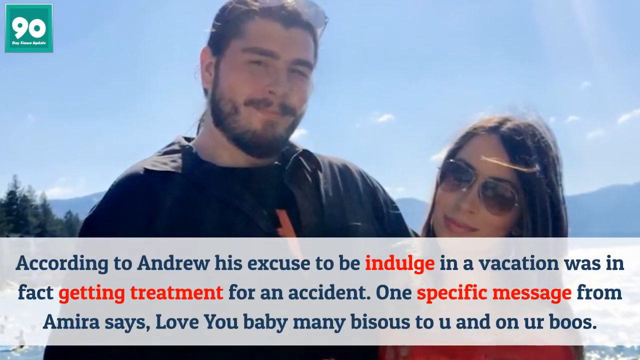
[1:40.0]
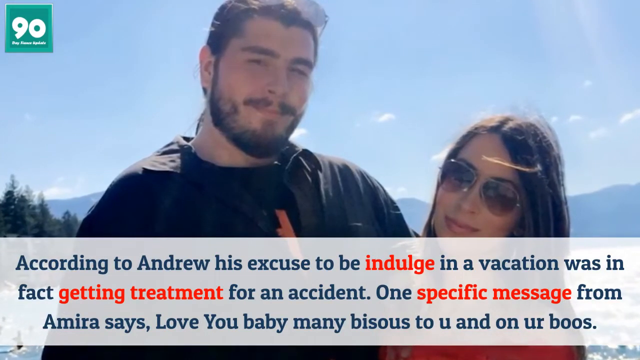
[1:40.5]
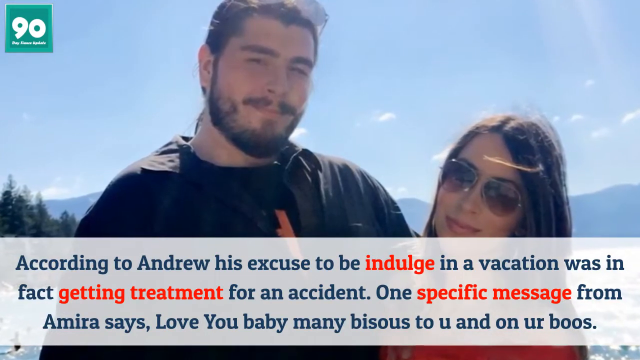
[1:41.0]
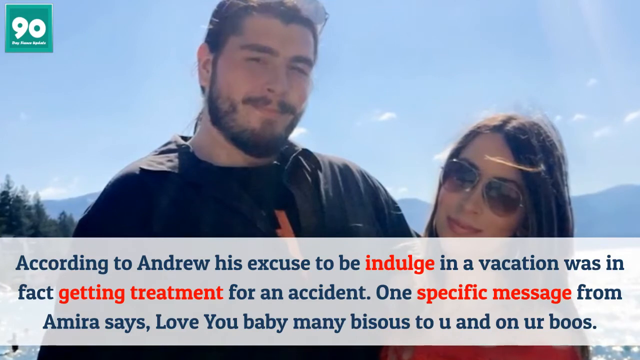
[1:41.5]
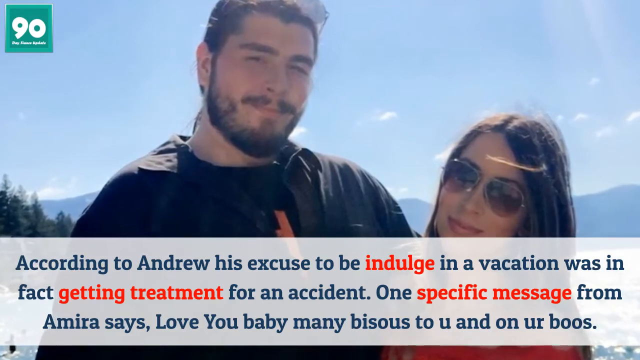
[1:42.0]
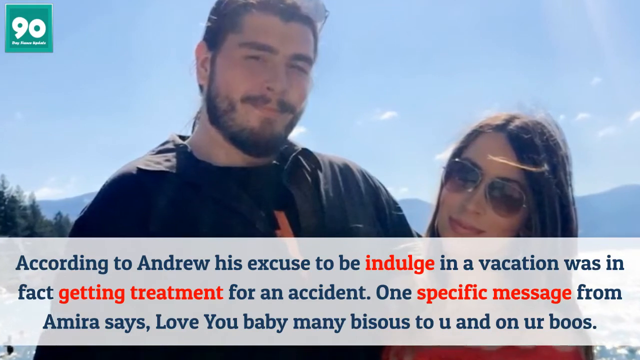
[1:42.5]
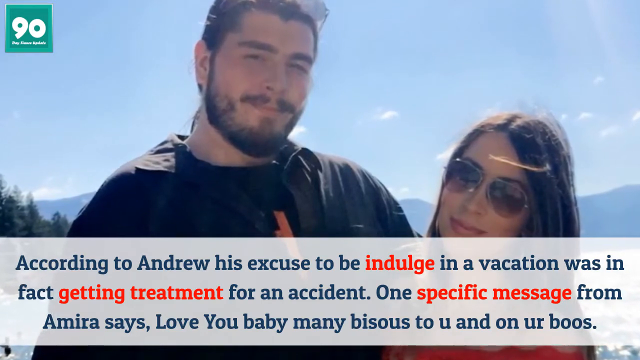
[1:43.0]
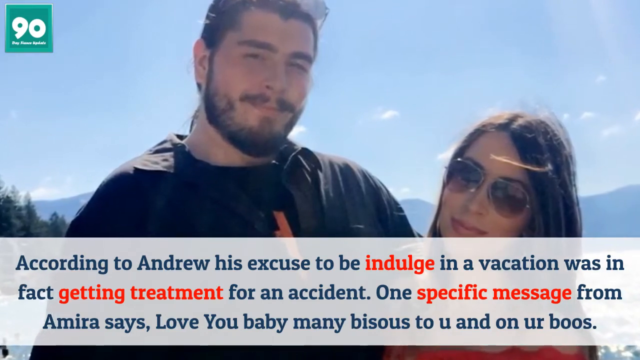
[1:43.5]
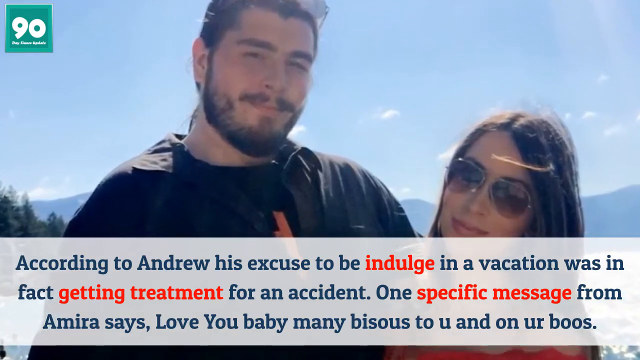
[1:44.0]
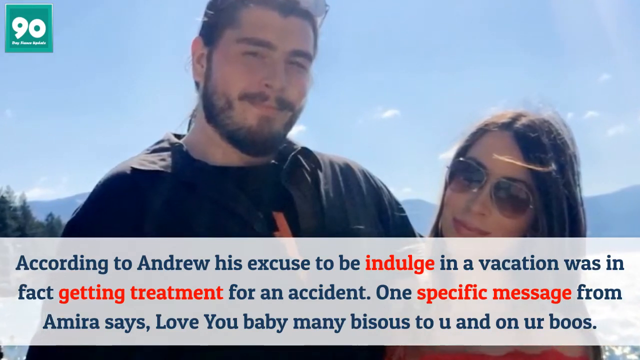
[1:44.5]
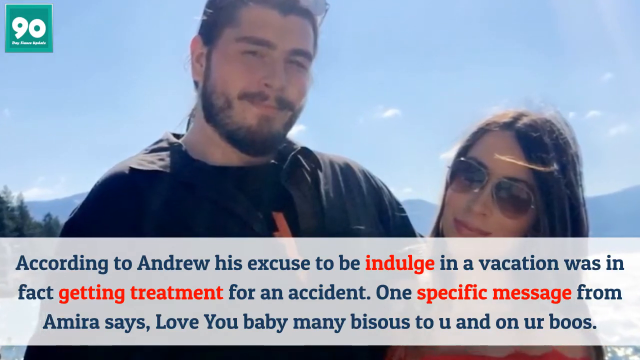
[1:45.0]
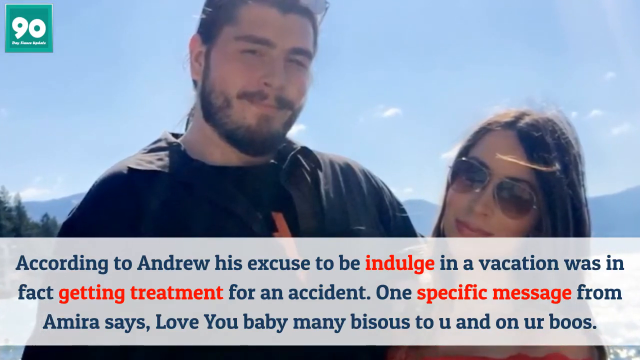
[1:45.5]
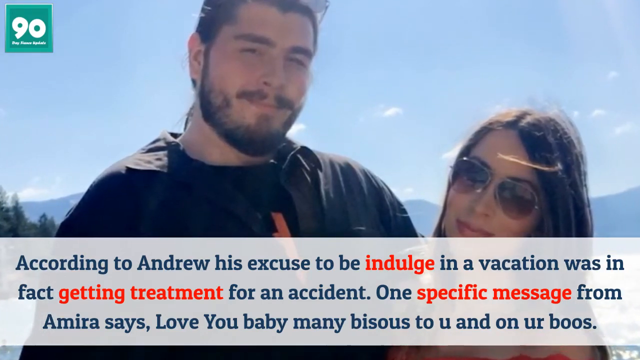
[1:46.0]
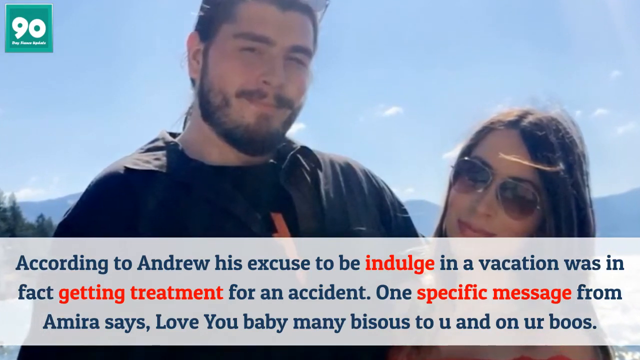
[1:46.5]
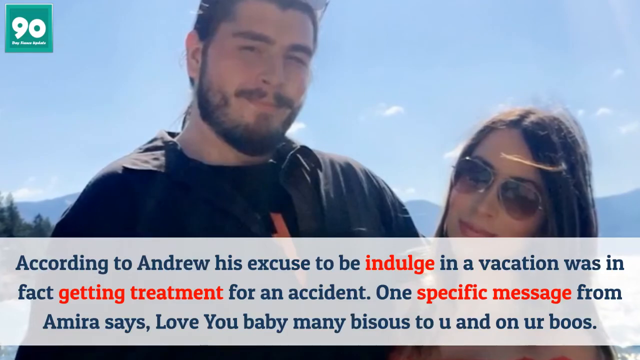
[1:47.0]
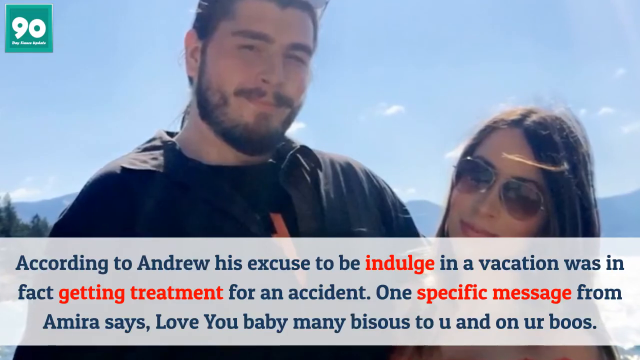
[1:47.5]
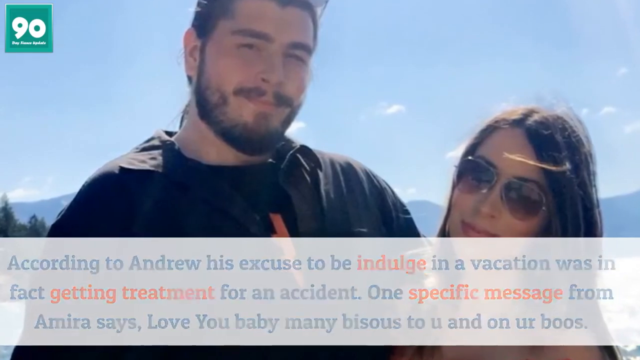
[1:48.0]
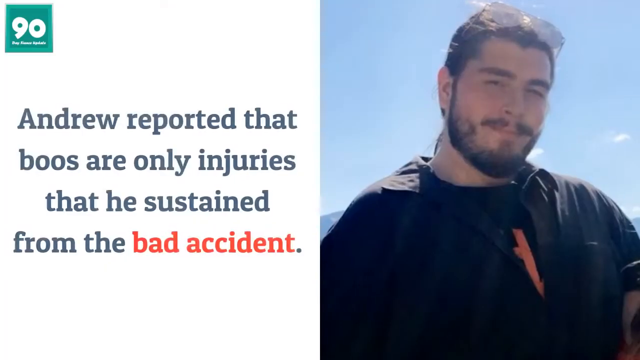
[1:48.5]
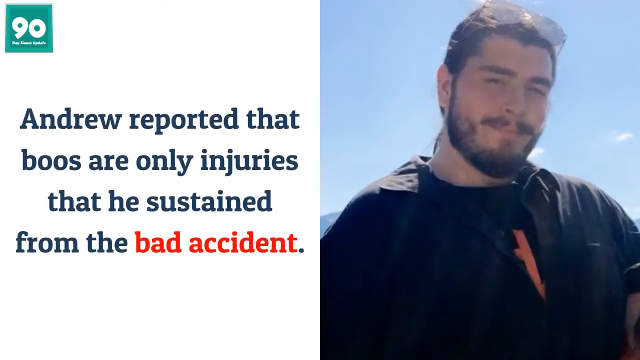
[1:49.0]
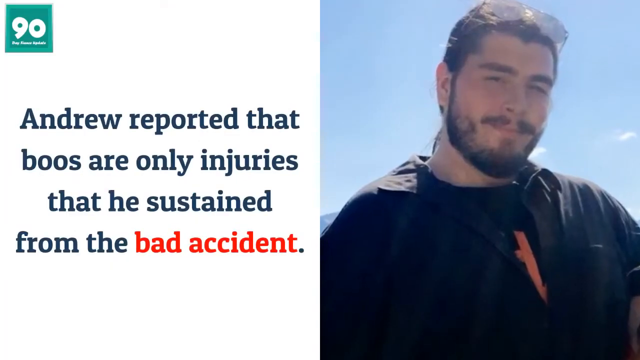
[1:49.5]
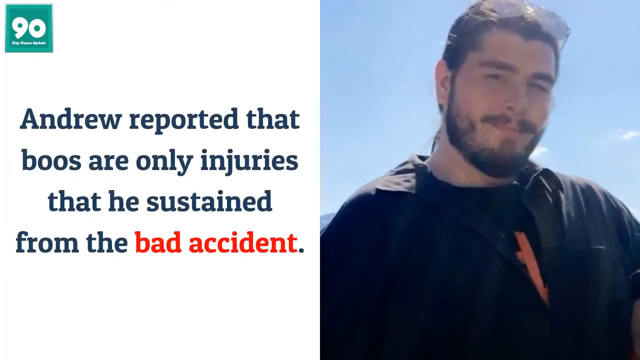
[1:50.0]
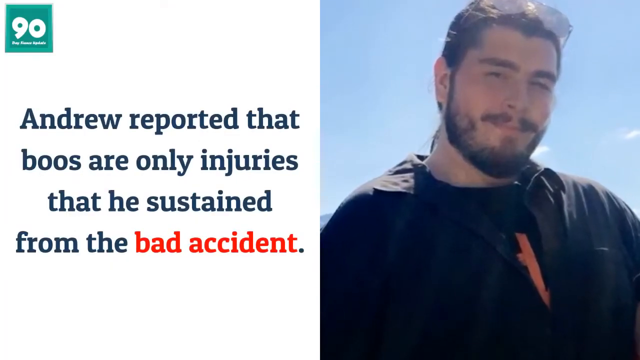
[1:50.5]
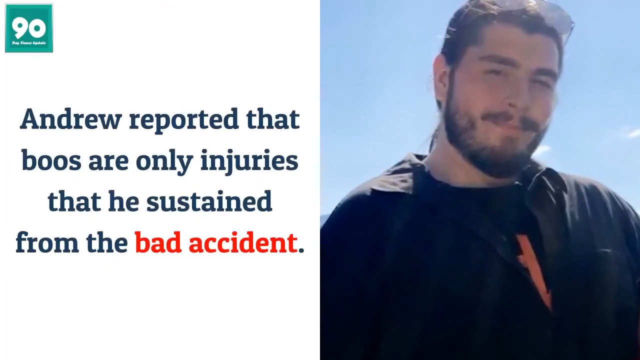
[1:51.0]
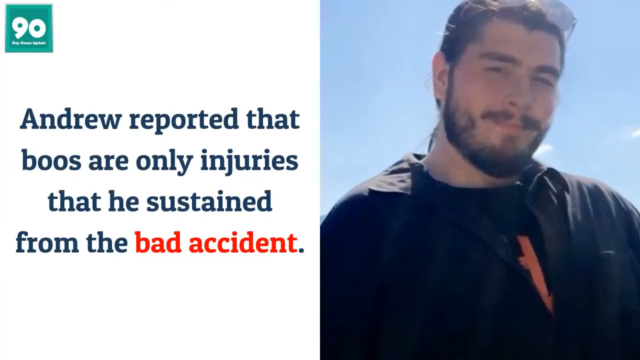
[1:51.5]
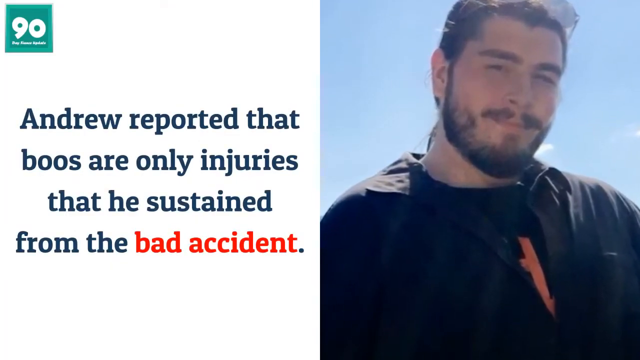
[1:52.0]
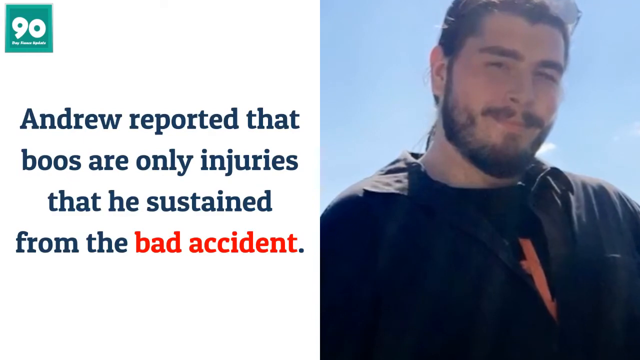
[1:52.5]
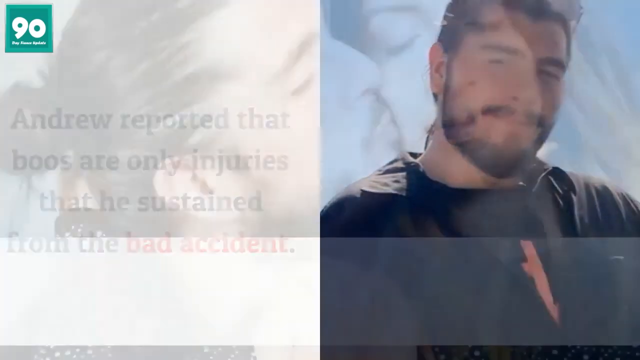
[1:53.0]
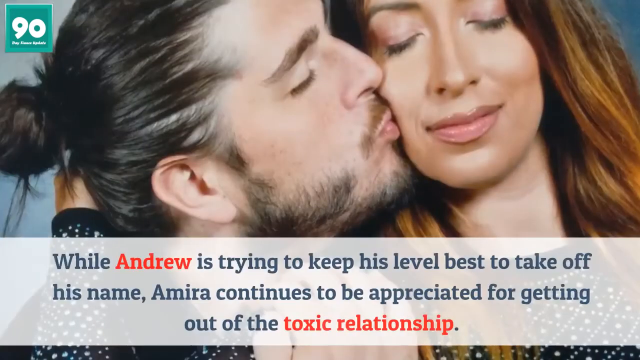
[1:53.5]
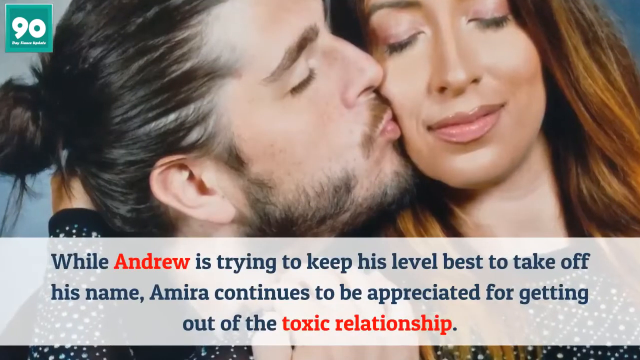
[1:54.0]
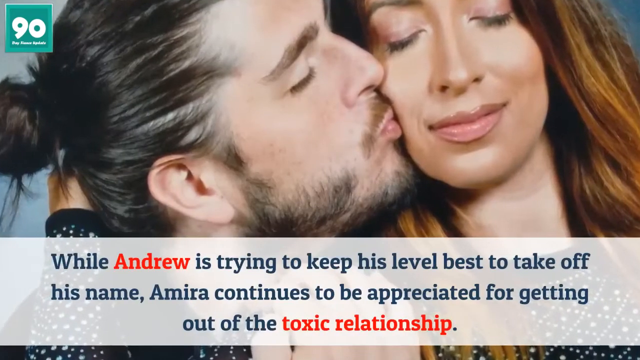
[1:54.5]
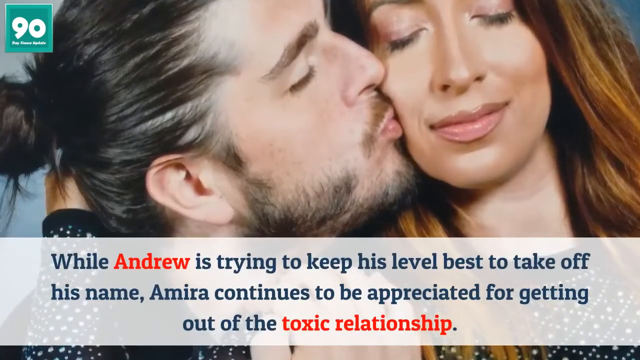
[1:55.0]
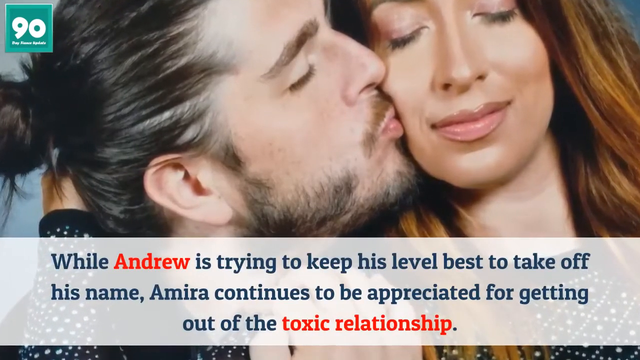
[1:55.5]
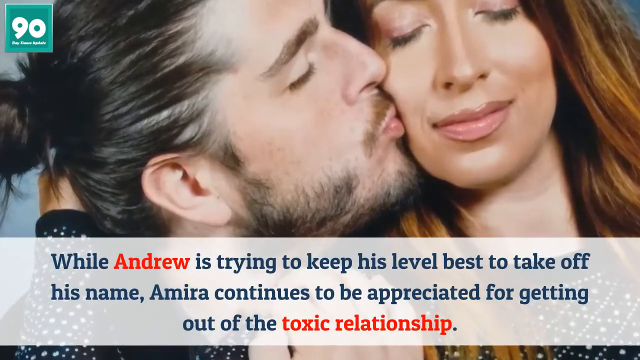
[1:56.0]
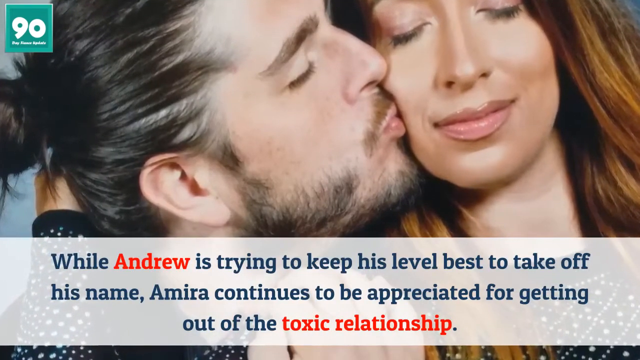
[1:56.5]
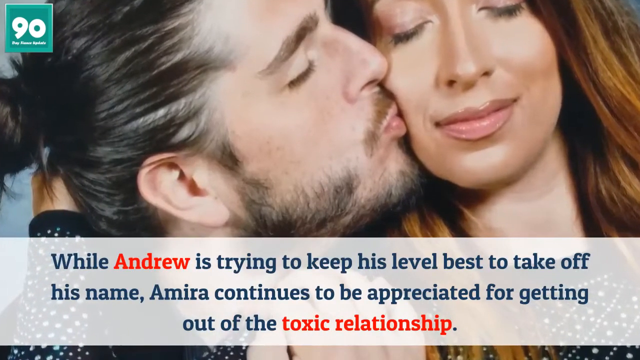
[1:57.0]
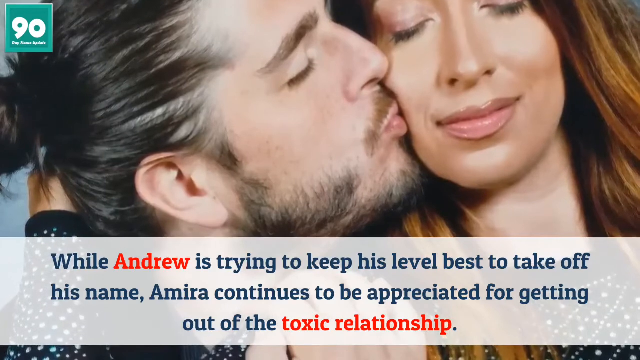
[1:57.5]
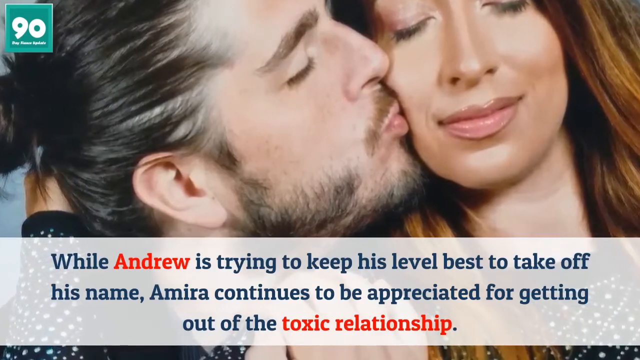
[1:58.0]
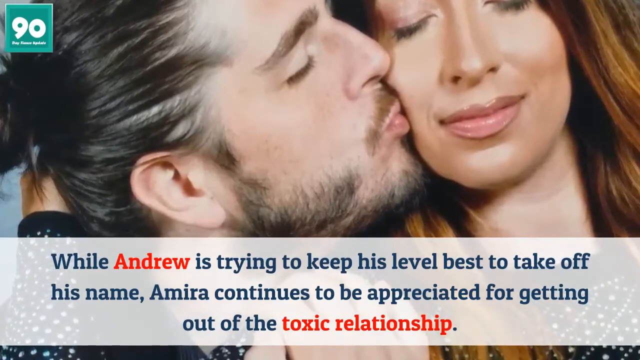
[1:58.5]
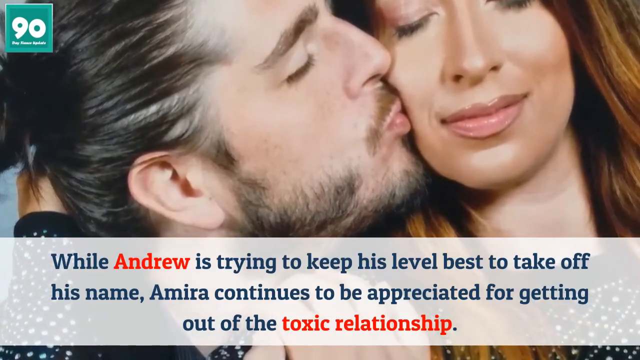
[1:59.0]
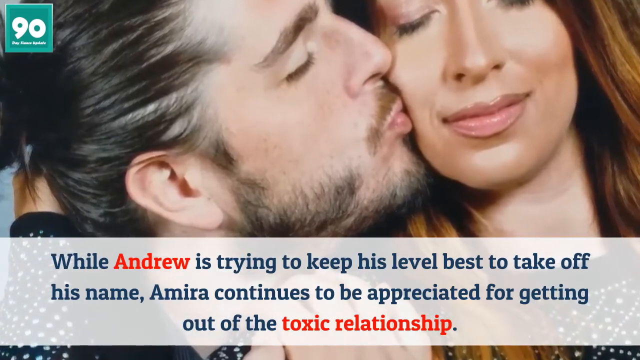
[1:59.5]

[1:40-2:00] The image of Andrew and Amira standing in front of the mountainous background is shown, with the sun shining brightly on both of them. Amira wears dark sunglasses while Andrew has sunglasses on his head, and they are standing in a very close, intimate pose. The video cuts to an image of just Andrew cropped from that picture with the mountains, with a caption beside it: "Andrew reported that boos are only injuries that he sustained from the bad accident." Another image shows Andrew and Amira with their eyes closed; Andrew has his hair in a bun and is kissing Amira on the cheek while she has her arm around his neck. A caption on top of the picture reads "While Andrew is trying to keep his level best" and continues "Amira continues to be appreciated for getting out of the toxic relationship."